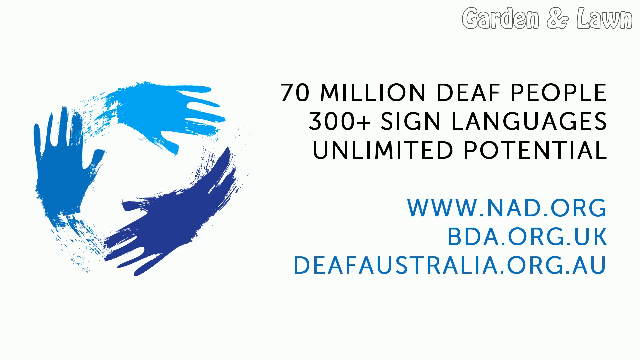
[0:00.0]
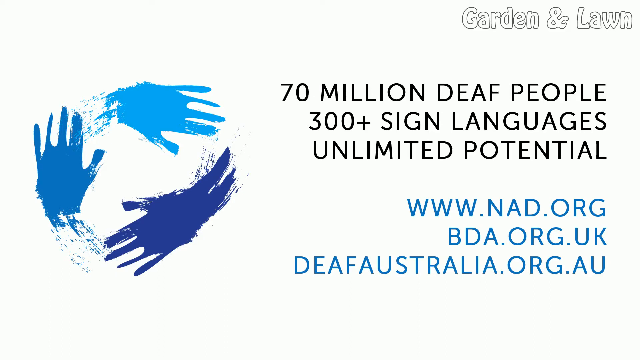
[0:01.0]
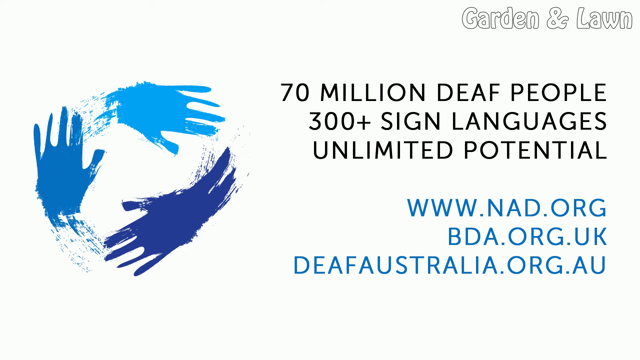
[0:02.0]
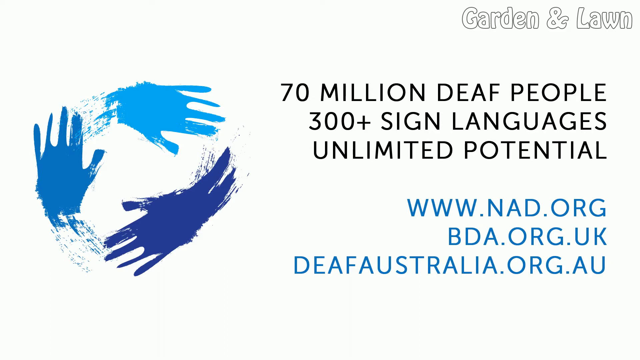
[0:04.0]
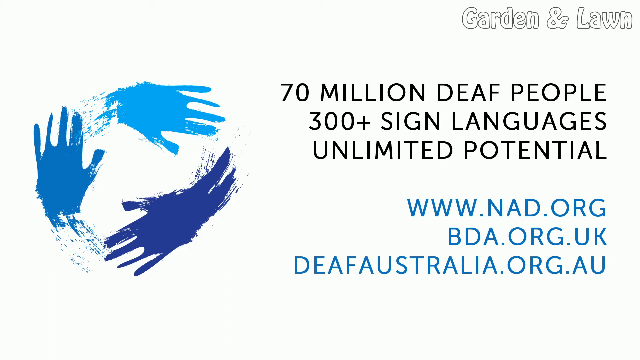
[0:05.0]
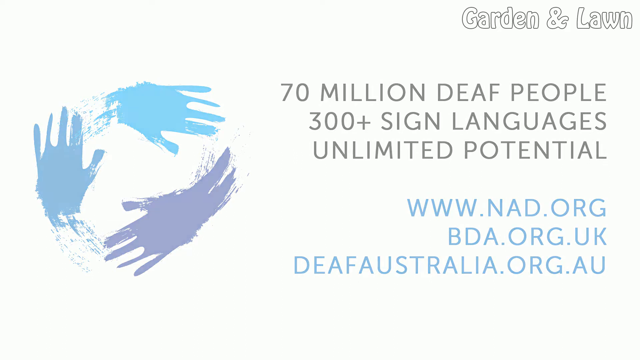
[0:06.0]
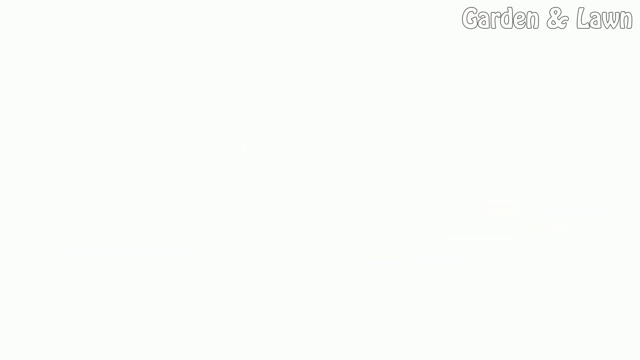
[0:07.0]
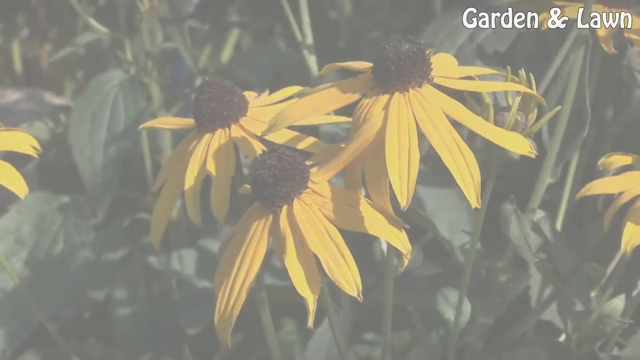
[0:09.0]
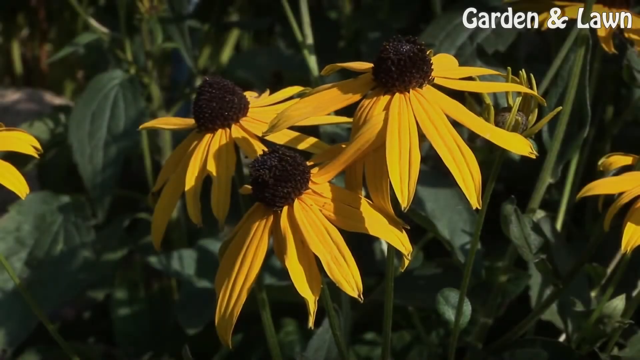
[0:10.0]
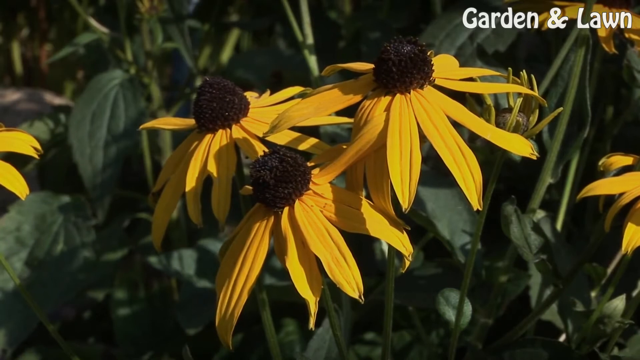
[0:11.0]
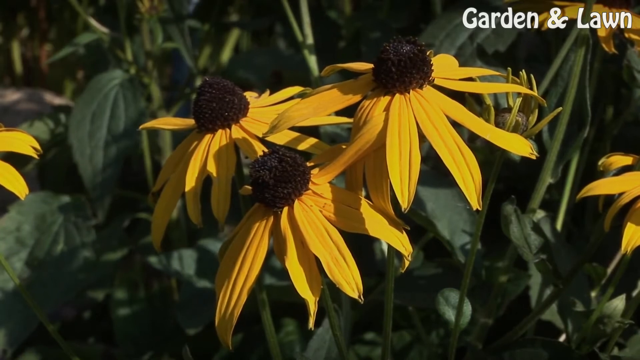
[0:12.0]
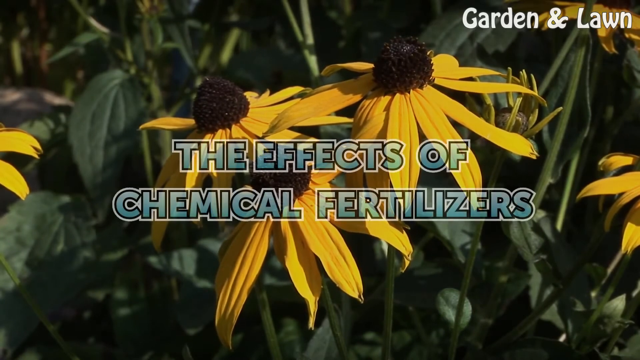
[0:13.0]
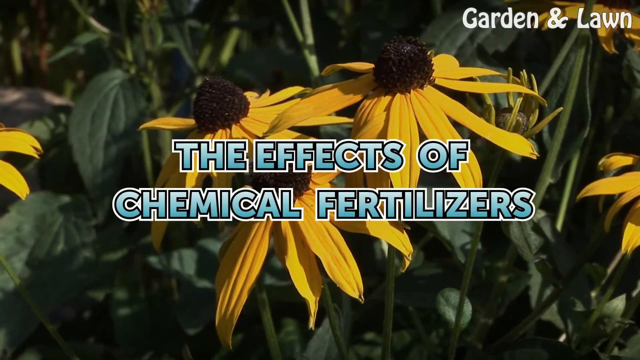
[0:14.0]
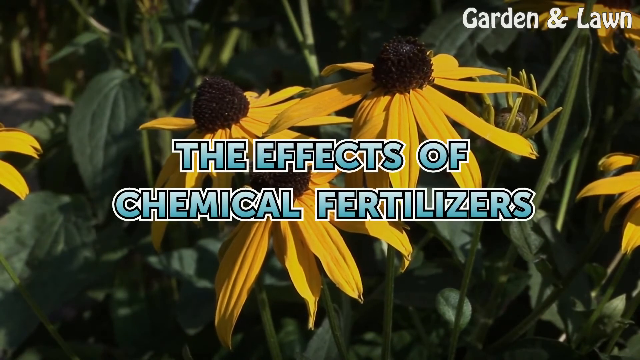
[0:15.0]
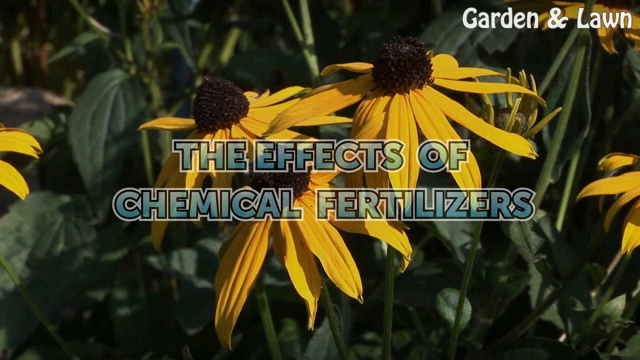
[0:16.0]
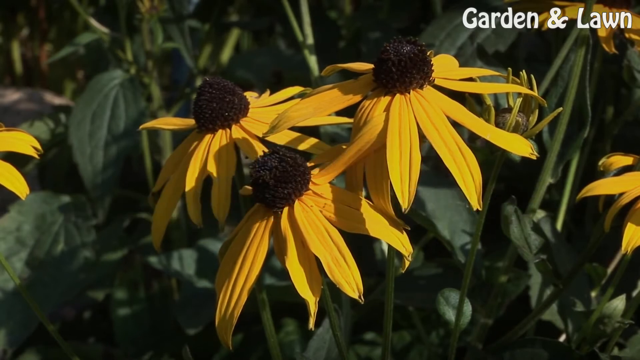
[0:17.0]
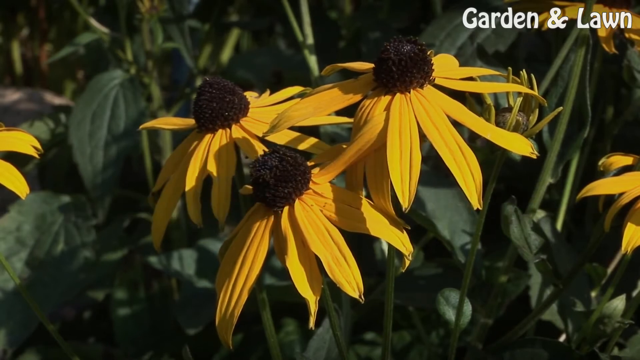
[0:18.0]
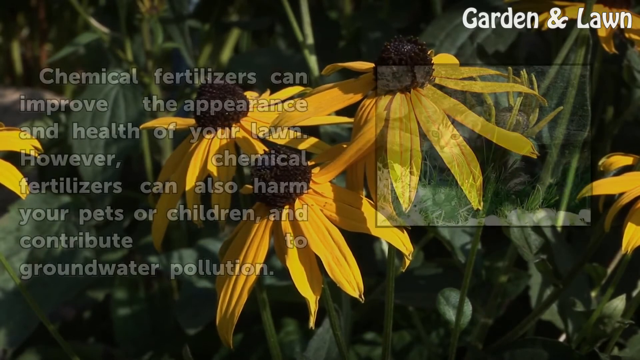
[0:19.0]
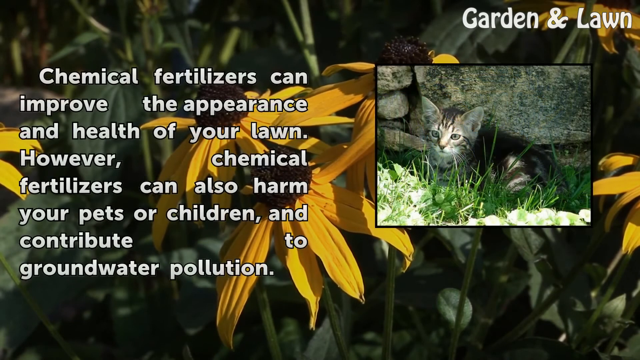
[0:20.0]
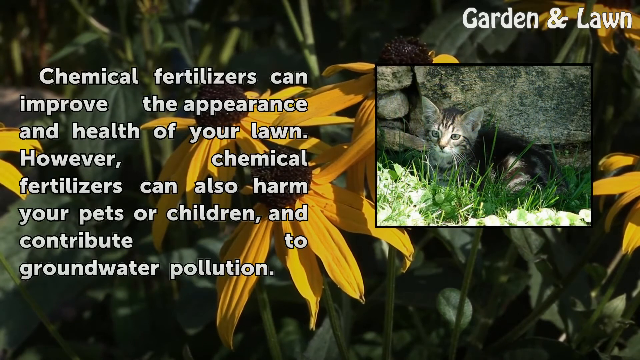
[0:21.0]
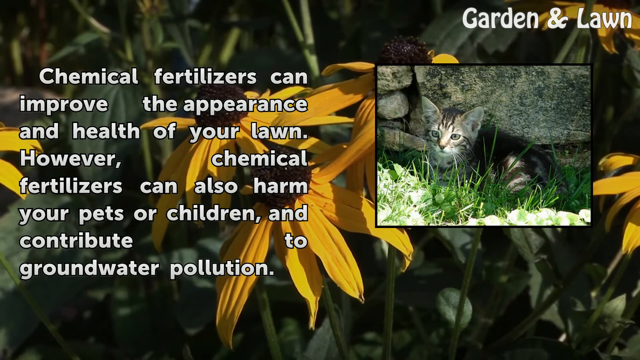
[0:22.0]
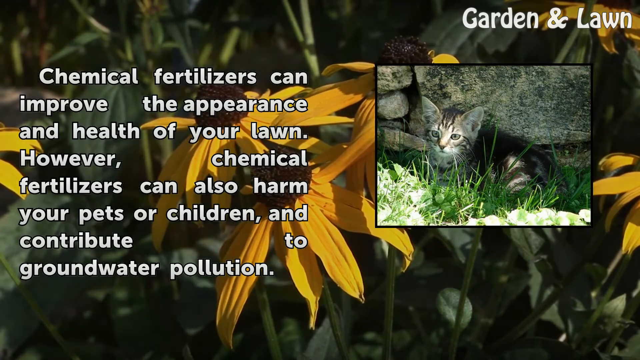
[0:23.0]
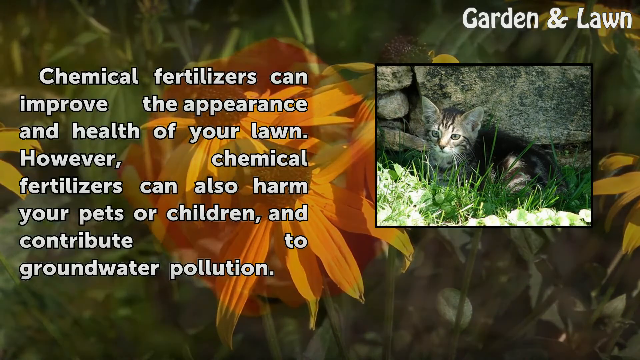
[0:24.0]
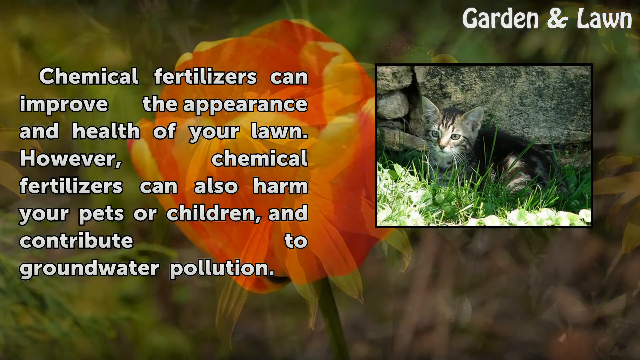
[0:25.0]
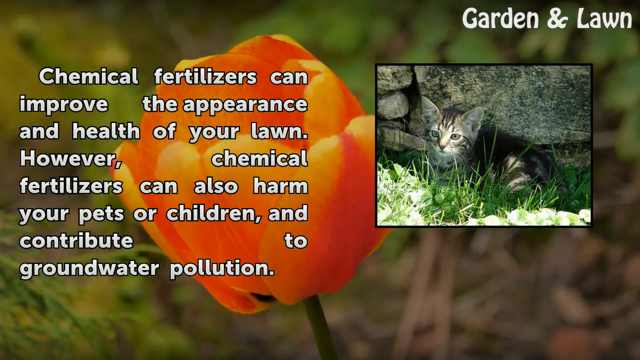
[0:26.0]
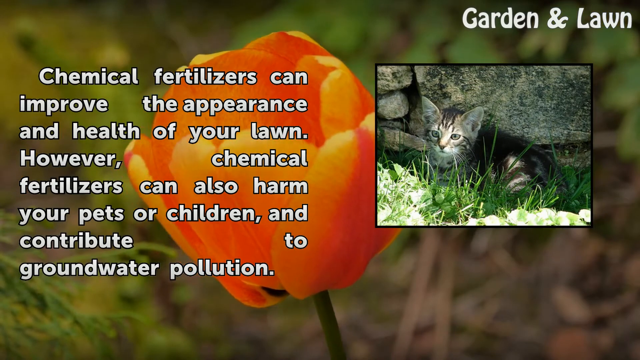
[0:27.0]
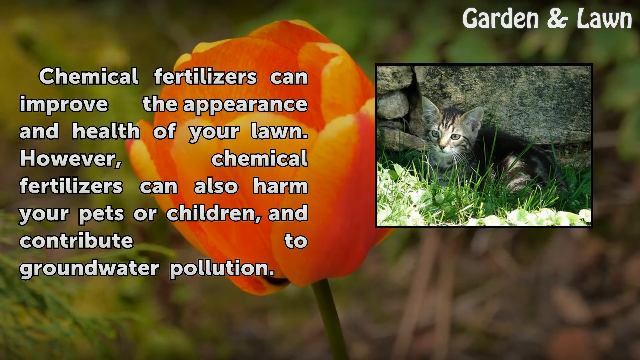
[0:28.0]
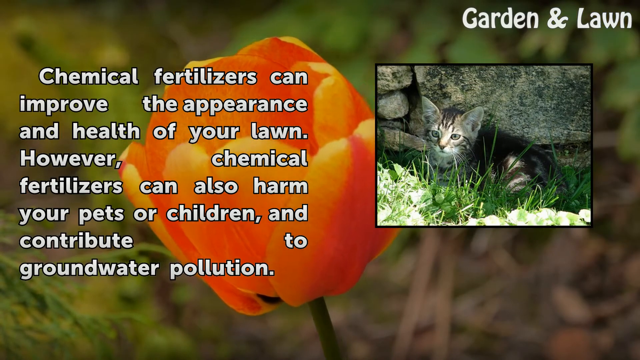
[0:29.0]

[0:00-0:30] The video opens on a white background with a logo of three hands in various shades of blue on the left and text on the right. In the top right corner, text in white with a black outline reads "garden and lawn". The text on the right reads "70 million deaf people, 300 plus sign languages, unlimited potential", and three URLs appear in blue: "www.nad.org", "bda.org.uk" and "deafaustralia.org.au". This fades to white and then to a picture of three flowers with petals in a garden, with green leaves and stems in the background. Text appears in the centre reading "the effects of chemical fertilisers" in gradient blue and white lettering with black and white outlines. It disappears and transitions to a paragraph of text on the left and a small thumbnail picture on the right of a cat sitting in front of some rocks on green grass. The text reads "chemical fertilizers can improve the appearance and health of your lawn, however chemical fertilizers can also harm your pets or children and contribute to groundwater pollution." The background then changes to a single reddish-orange flower, with a blurred background of leaves and the garden.